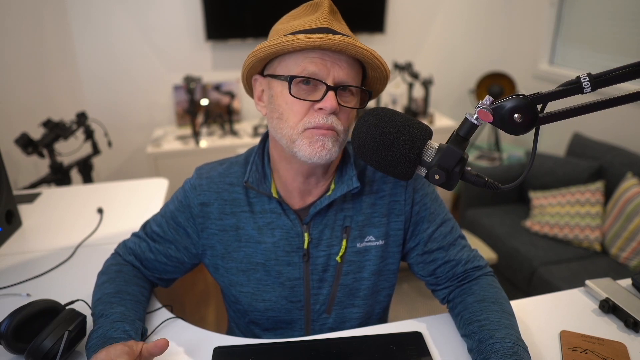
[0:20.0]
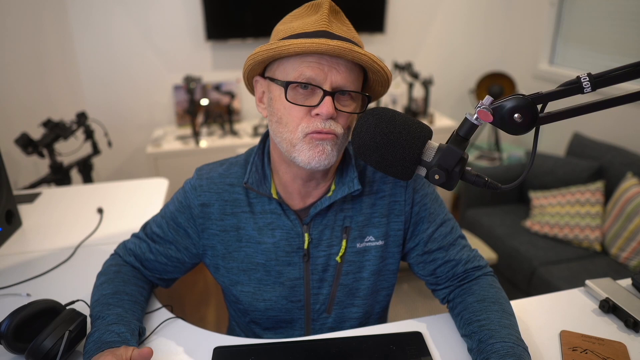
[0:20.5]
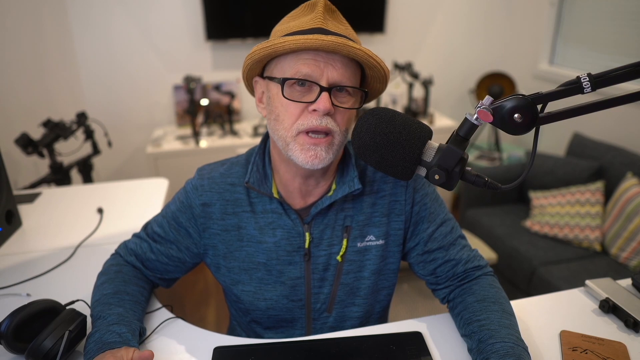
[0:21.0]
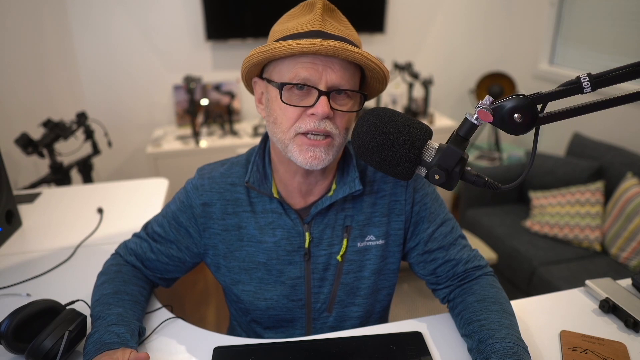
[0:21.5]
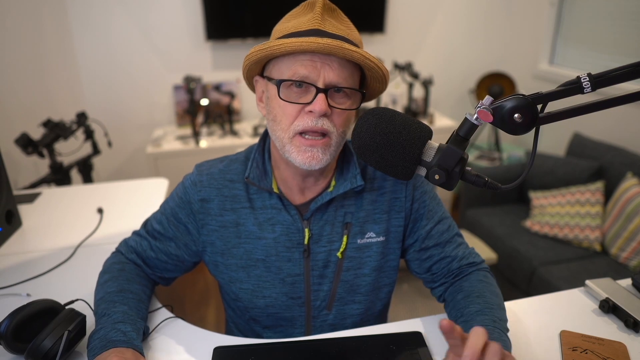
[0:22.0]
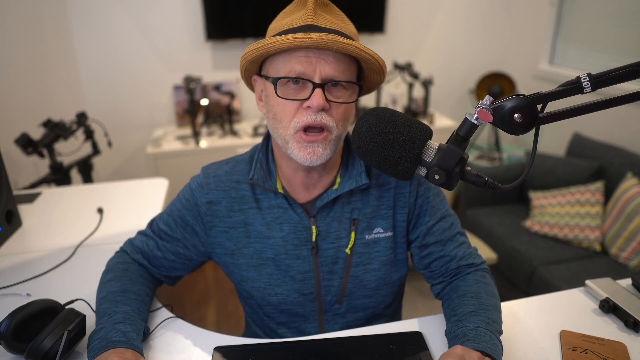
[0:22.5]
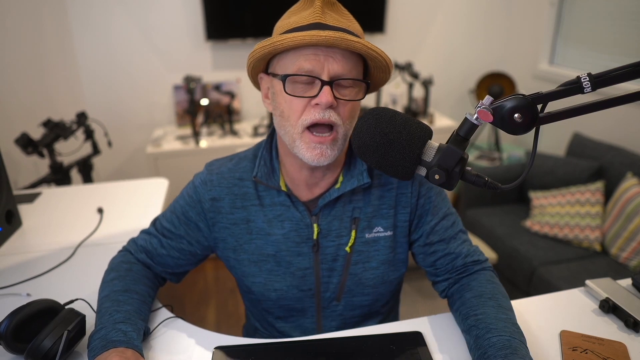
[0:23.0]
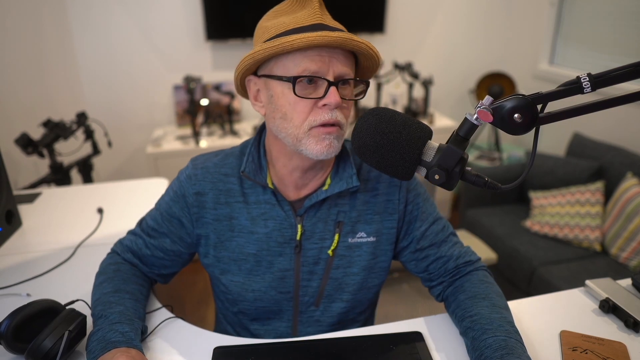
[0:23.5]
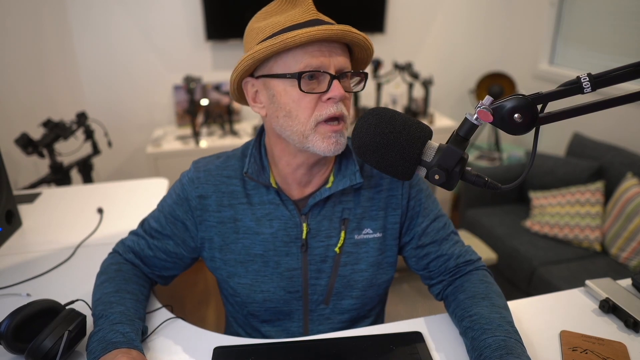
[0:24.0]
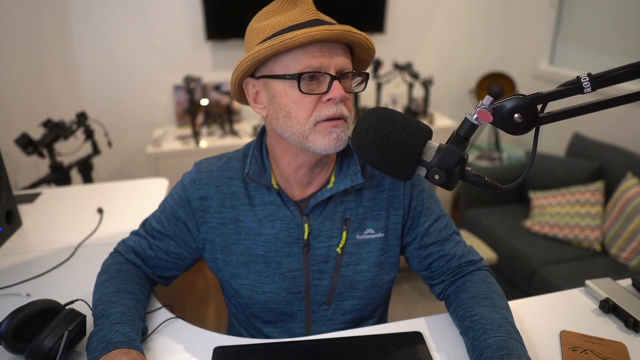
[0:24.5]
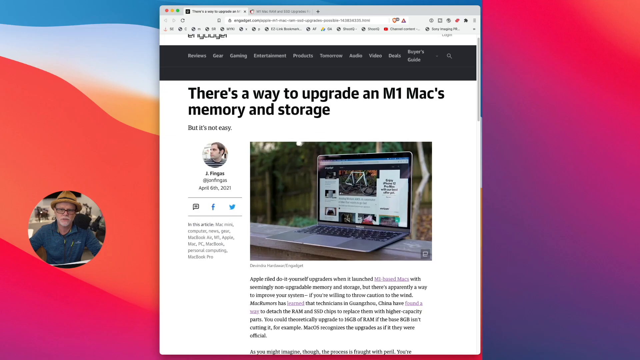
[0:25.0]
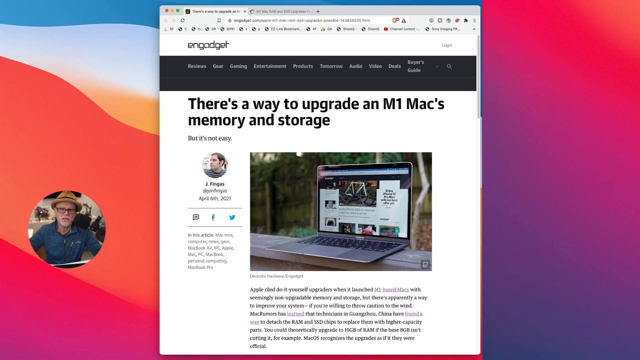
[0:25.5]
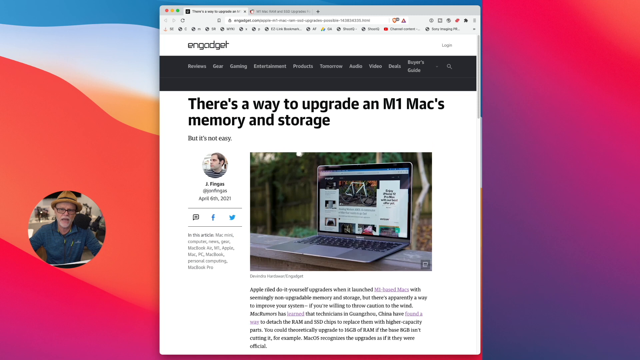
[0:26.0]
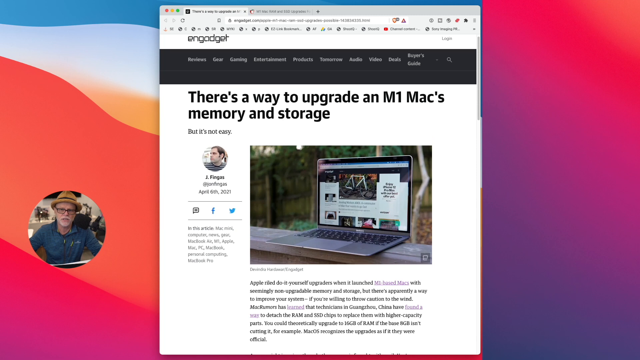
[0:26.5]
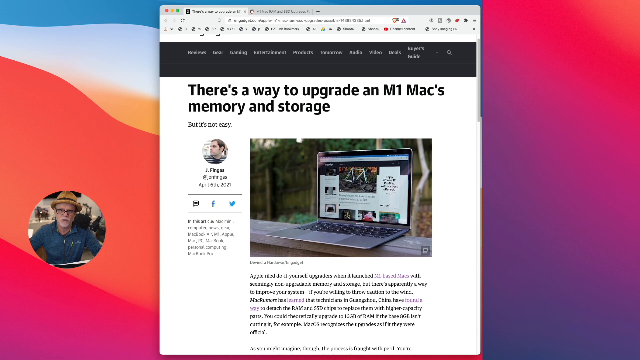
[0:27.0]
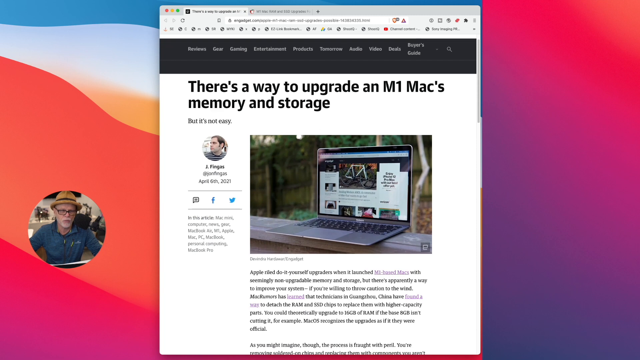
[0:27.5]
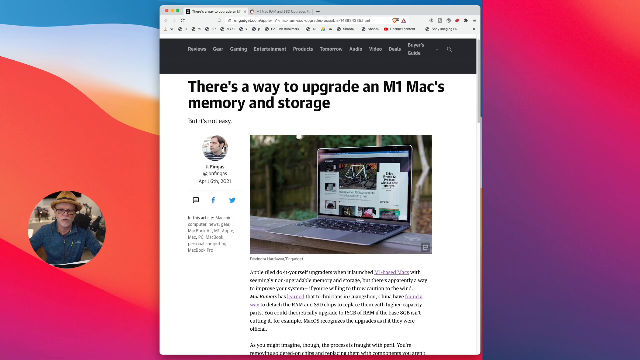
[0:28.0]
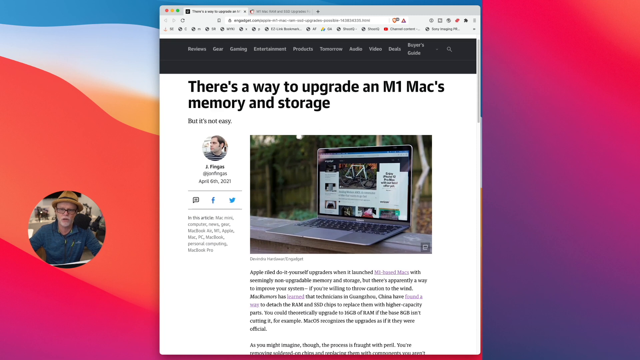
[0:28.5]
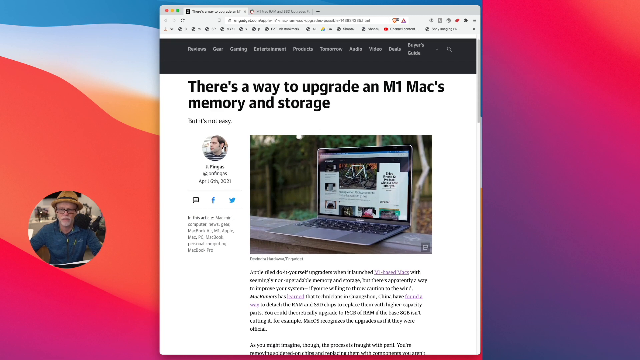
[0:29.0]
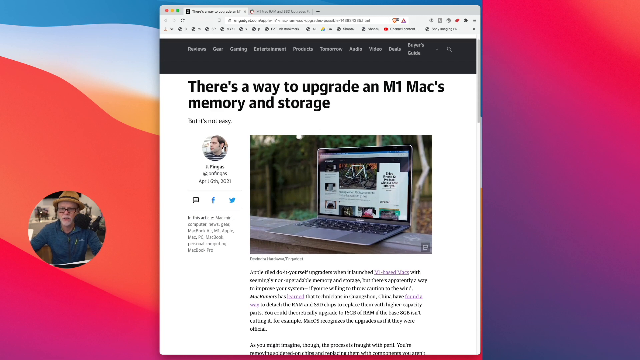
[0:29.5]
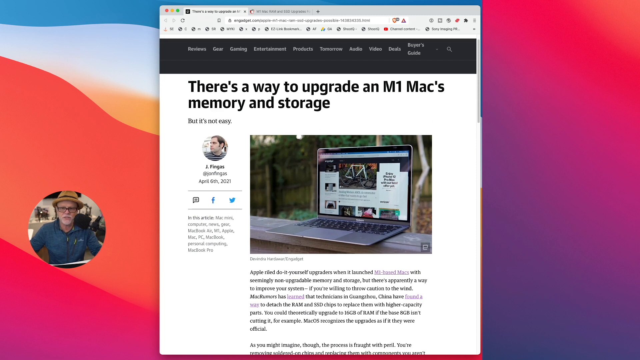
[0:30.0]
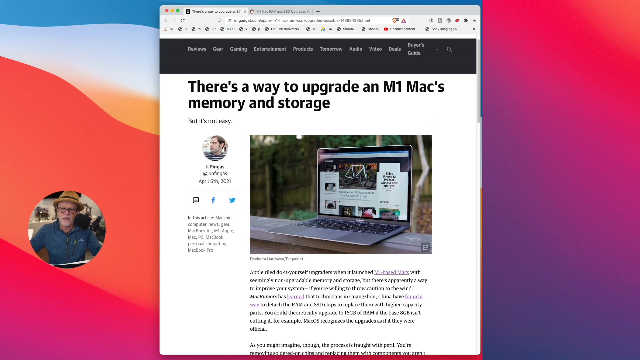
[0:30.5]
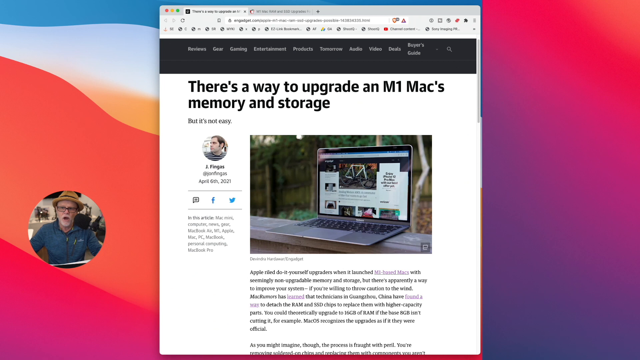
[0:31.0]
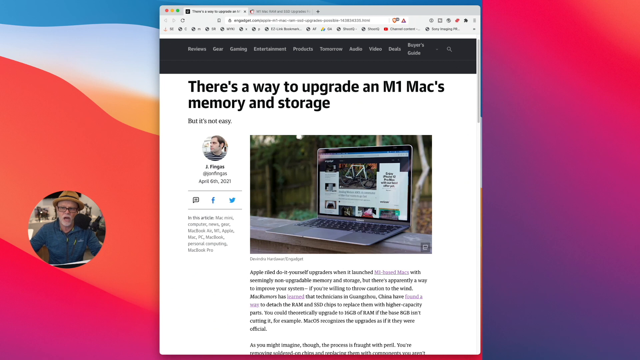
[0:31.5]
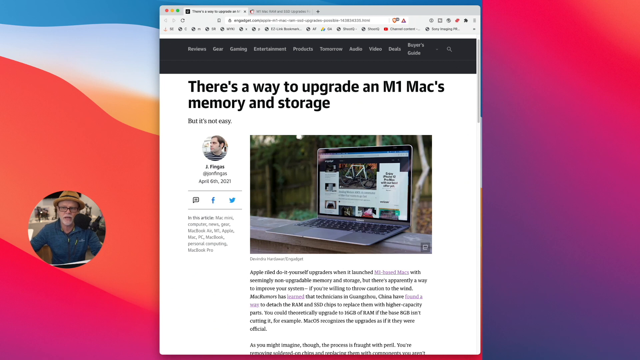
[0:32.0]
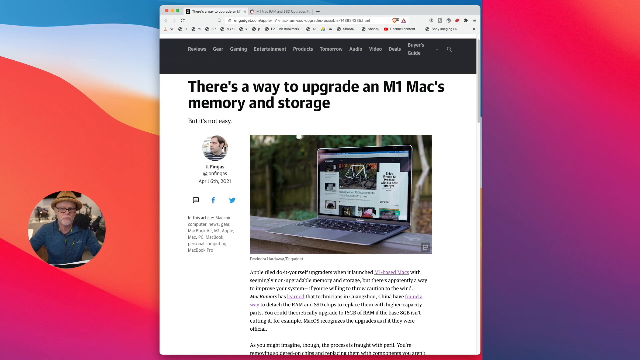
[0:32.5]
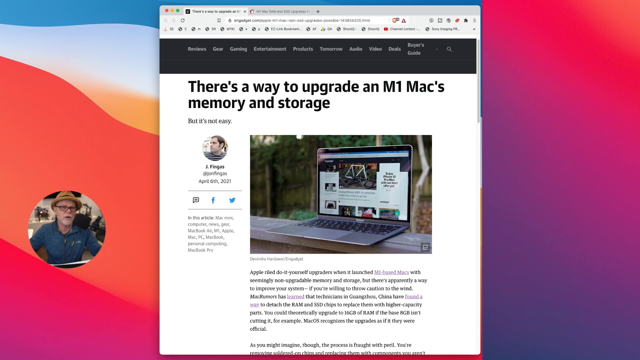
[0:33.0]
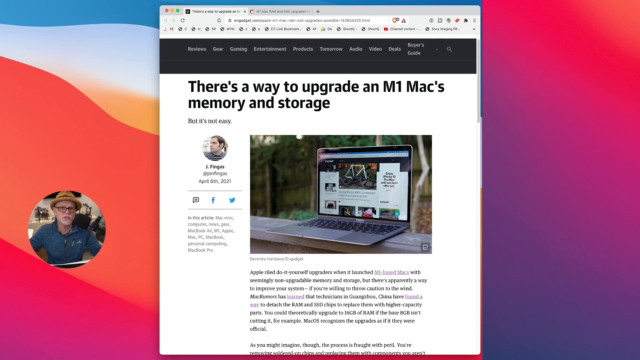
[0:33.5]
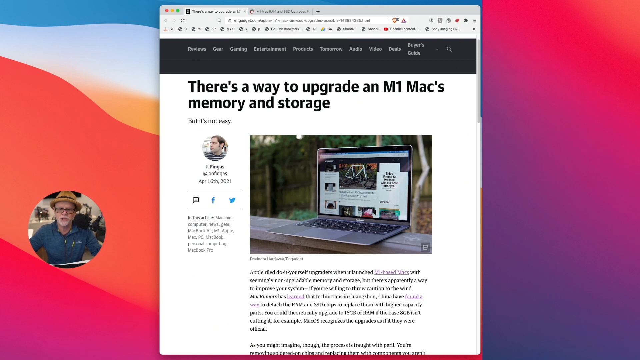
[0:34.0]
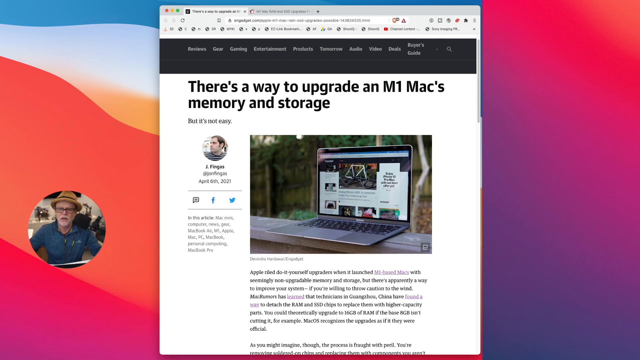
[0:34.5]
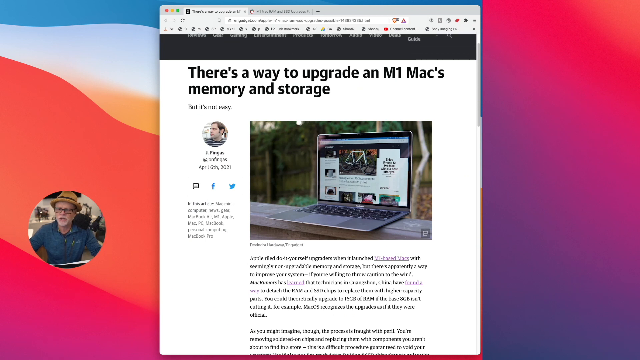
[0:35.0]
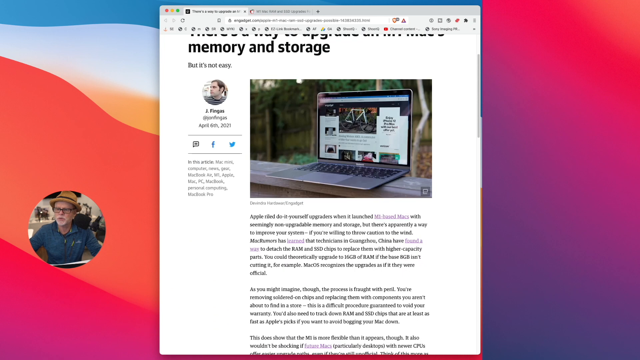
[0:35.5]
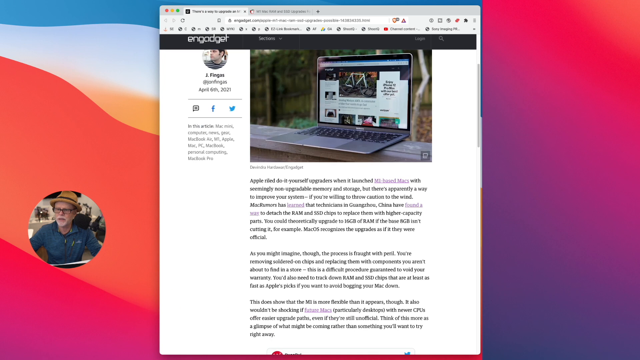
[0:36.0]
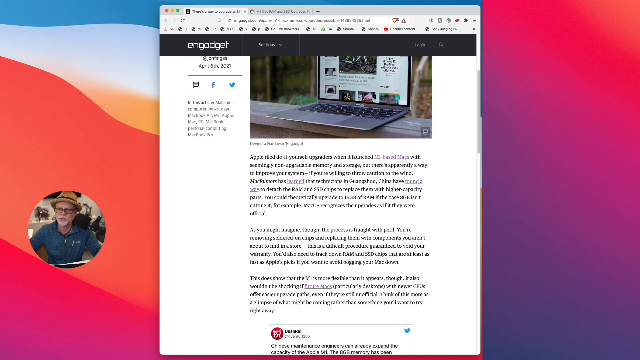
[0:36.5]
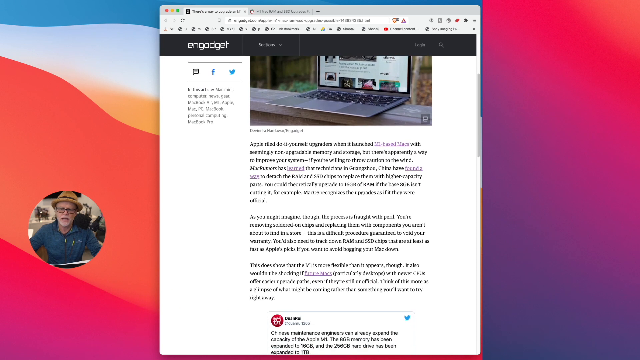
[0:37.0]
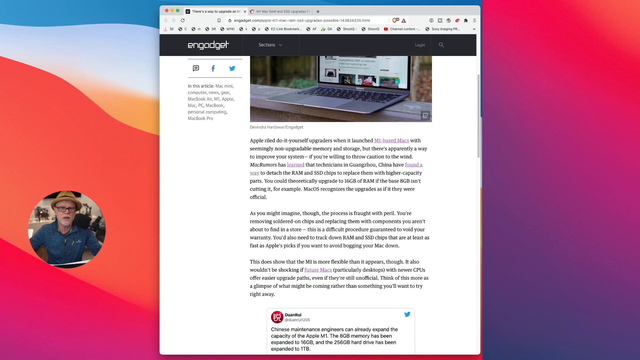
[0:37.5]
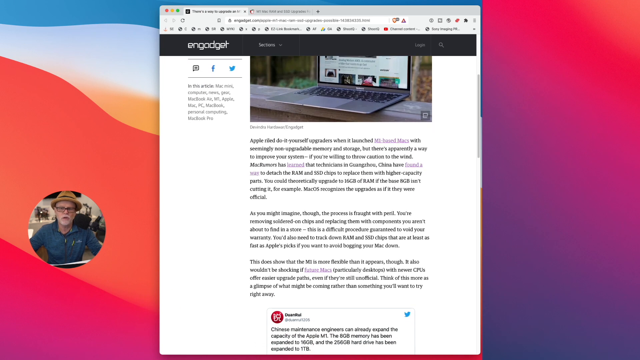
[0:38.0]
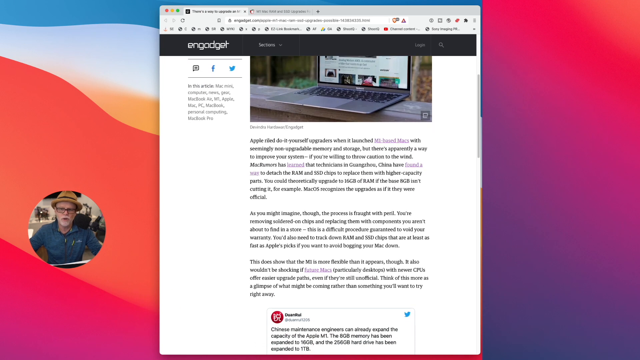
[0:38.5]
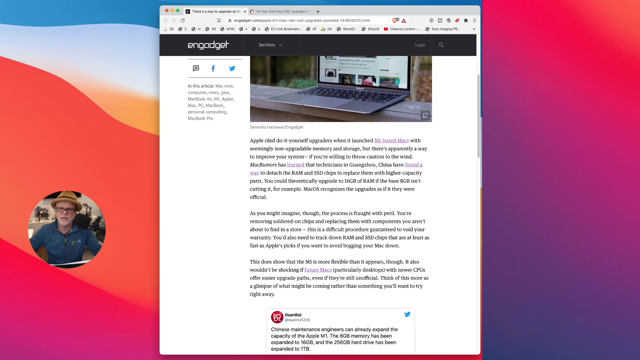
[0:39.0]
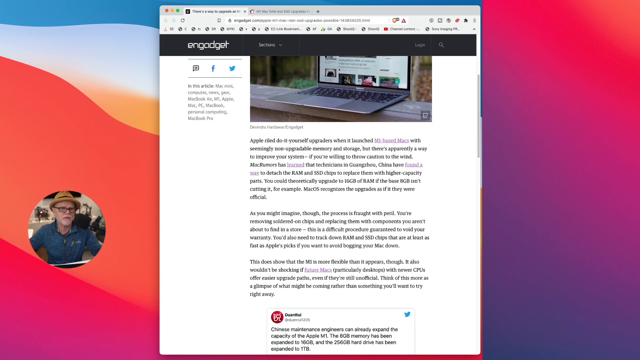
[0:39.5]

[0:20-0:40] The same camera view shows the man in his glasses, his head leaning toward the right side of the video. The microphone is very large, on a metal piece that hangs and bends at almost an L-shaped angle toward his face. As he talks, a little of his pointing finger on his right hand is visible. He then pulls up what looks like a link whose title, in black, reads "there's a way to upgrade an M1 Max" followed by words about memory and storage. There is an image of what is apparently a Mac laptop with a silver-gray keyboard. Other words are too small to read, but the Facebook logo and the Twitter bird logo are visible.